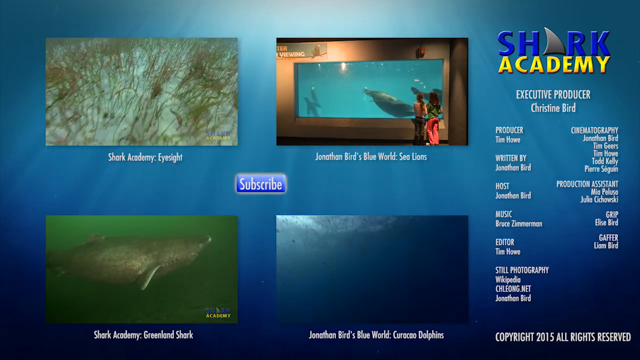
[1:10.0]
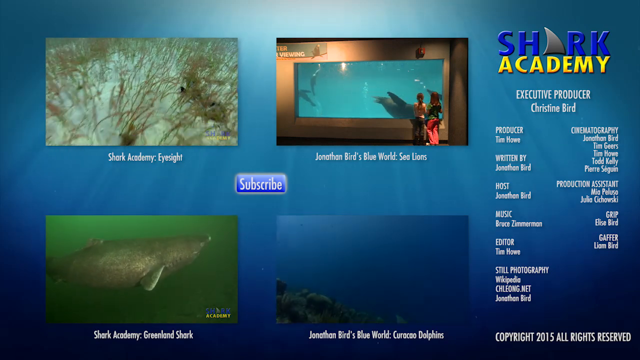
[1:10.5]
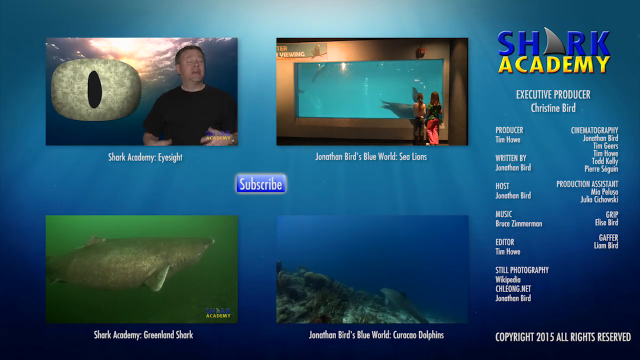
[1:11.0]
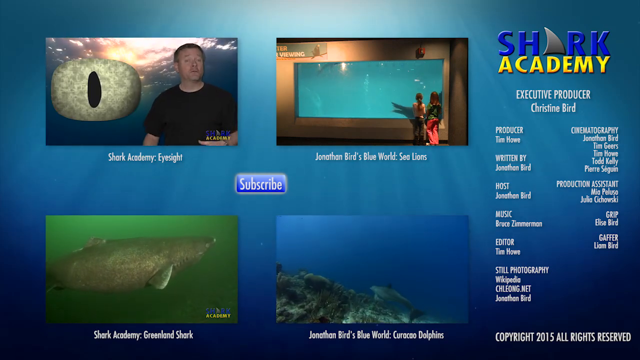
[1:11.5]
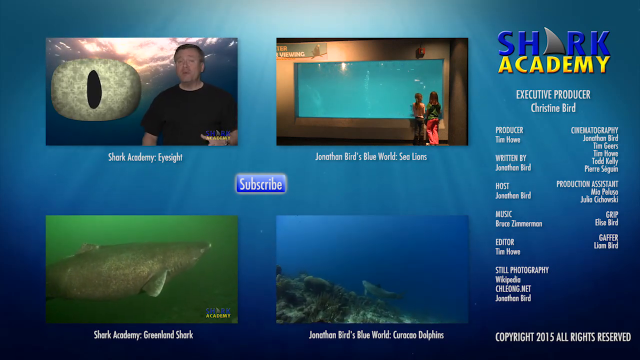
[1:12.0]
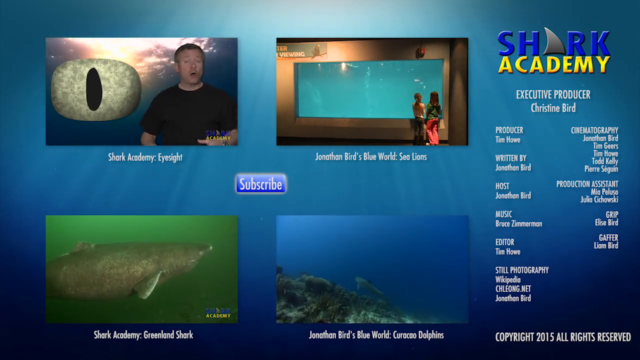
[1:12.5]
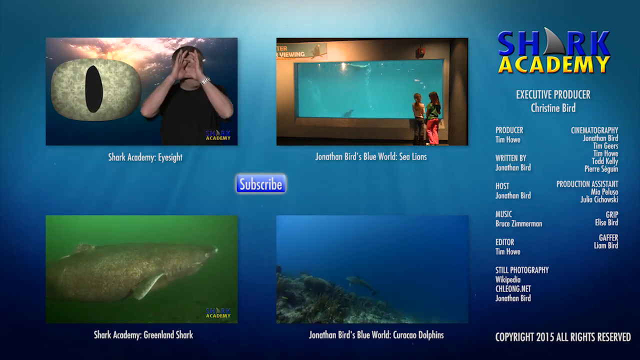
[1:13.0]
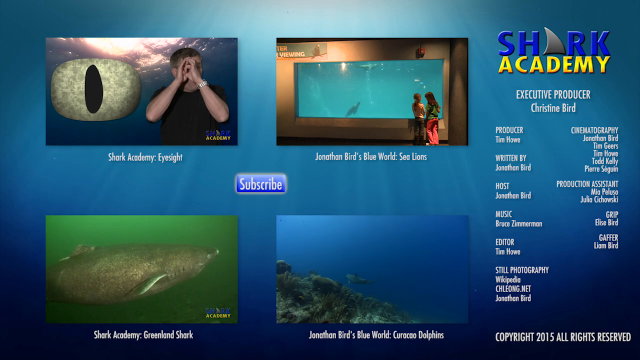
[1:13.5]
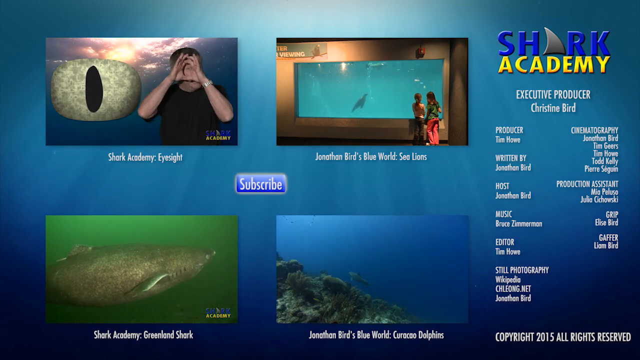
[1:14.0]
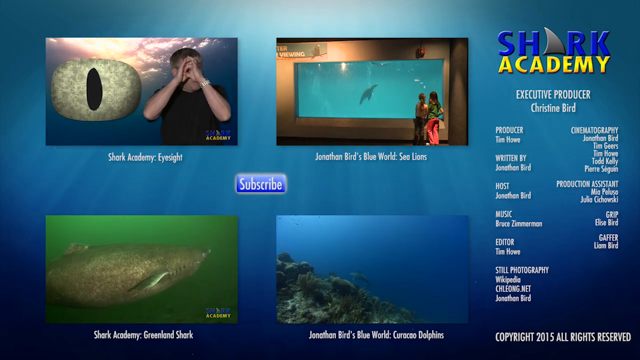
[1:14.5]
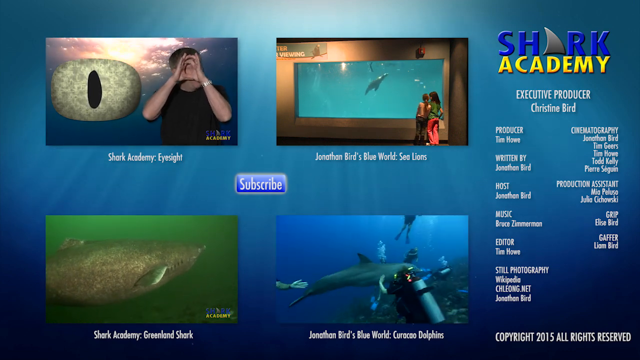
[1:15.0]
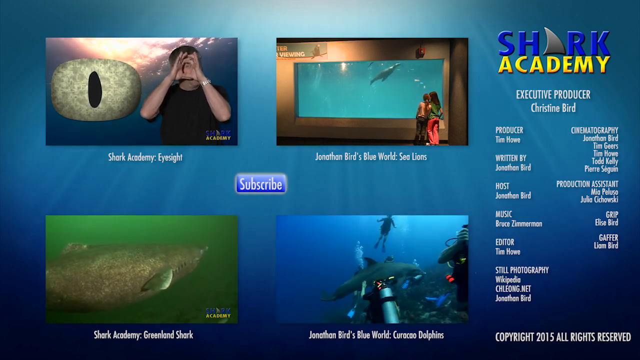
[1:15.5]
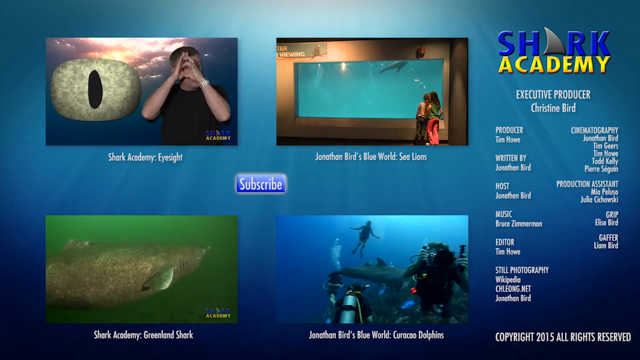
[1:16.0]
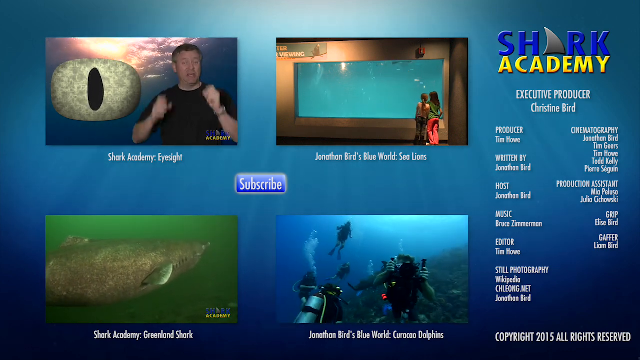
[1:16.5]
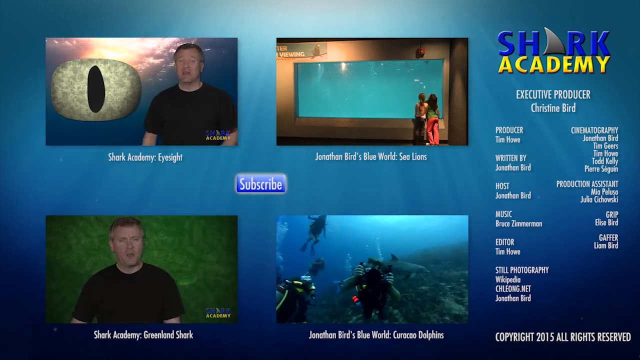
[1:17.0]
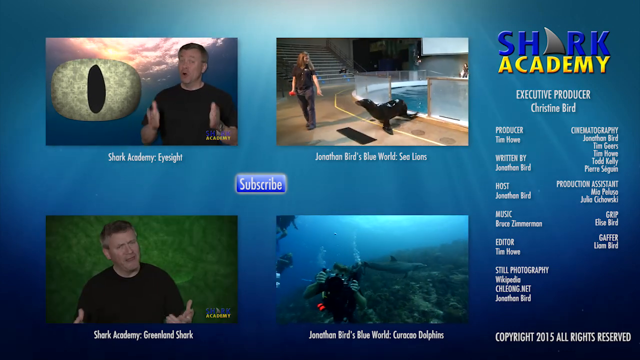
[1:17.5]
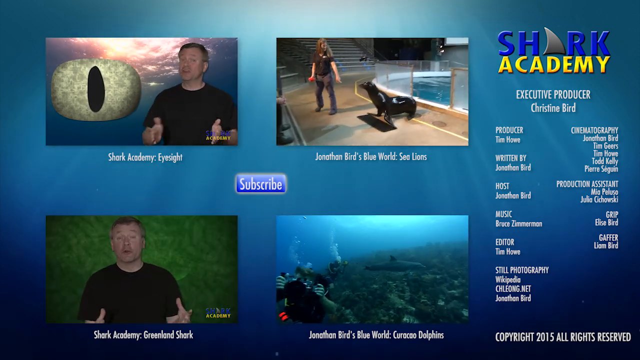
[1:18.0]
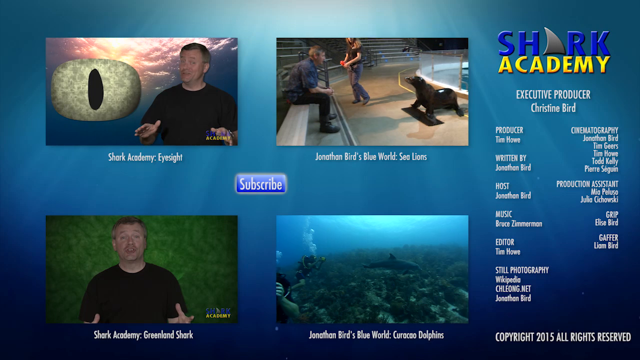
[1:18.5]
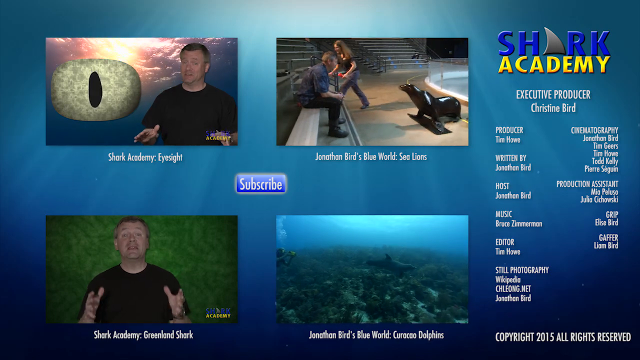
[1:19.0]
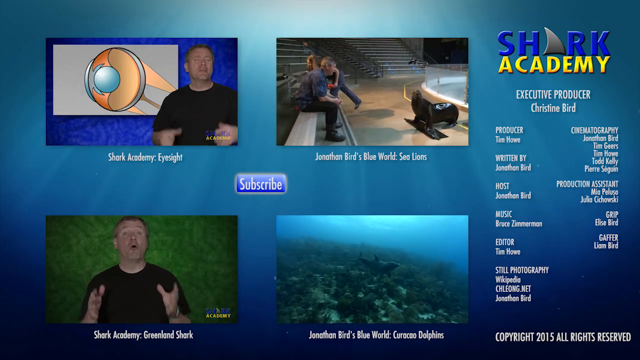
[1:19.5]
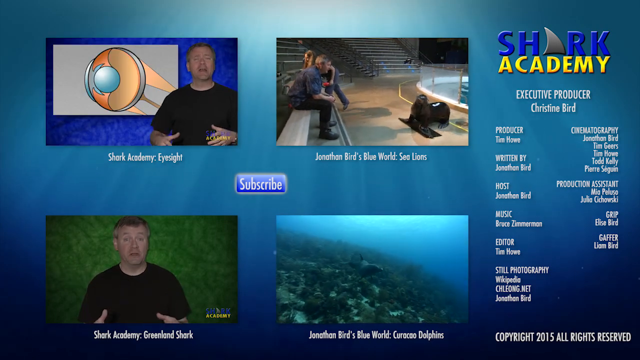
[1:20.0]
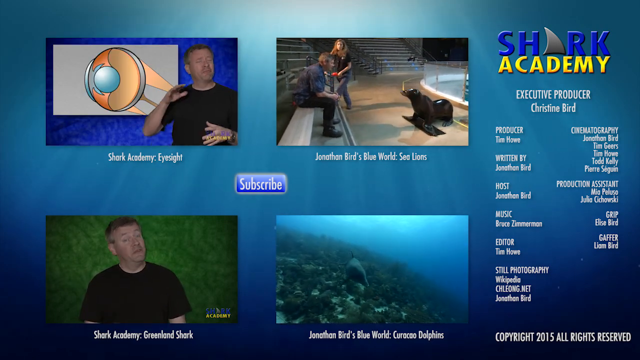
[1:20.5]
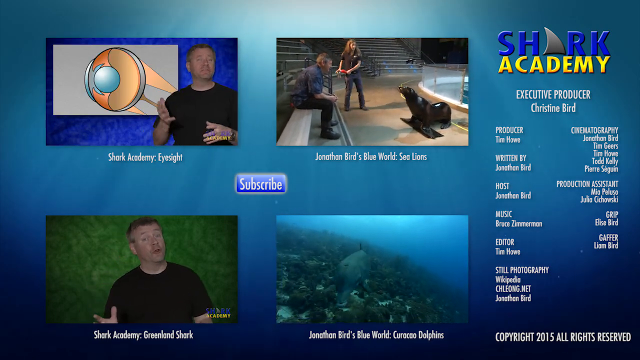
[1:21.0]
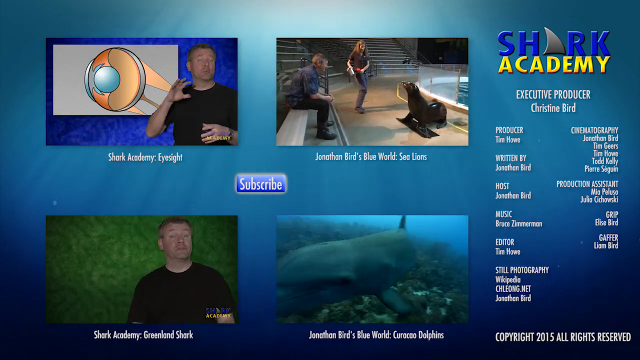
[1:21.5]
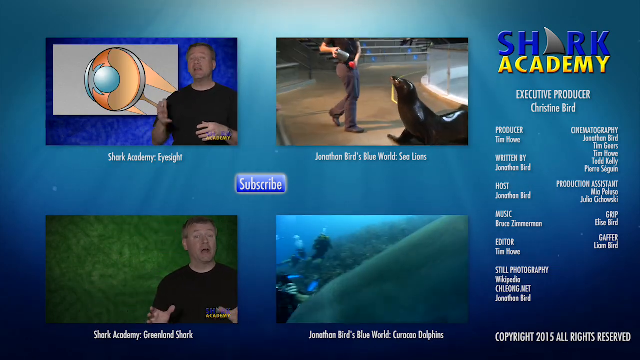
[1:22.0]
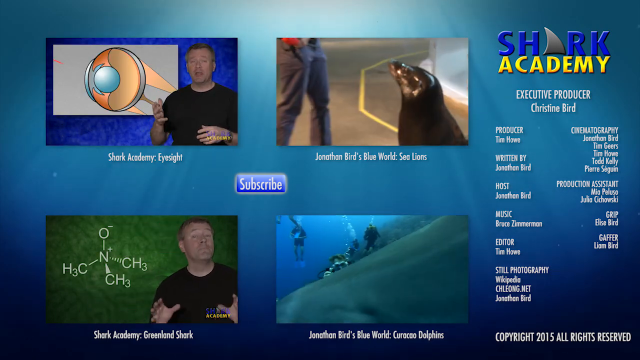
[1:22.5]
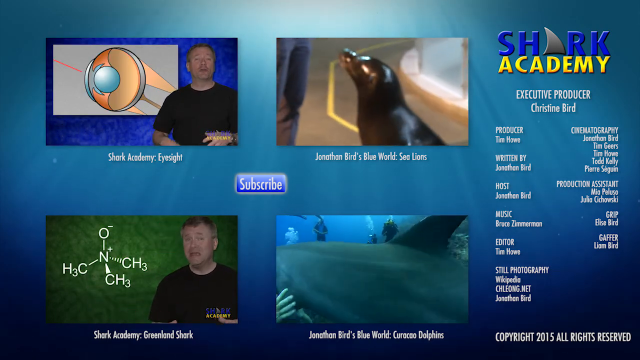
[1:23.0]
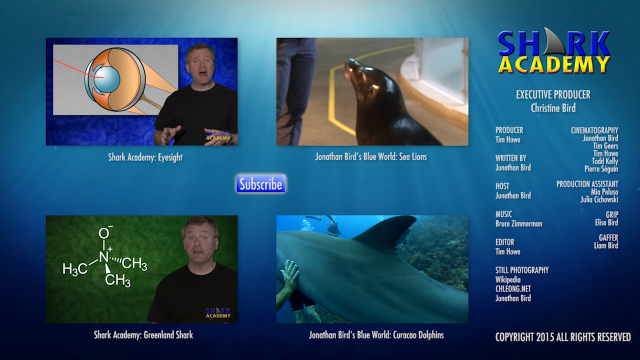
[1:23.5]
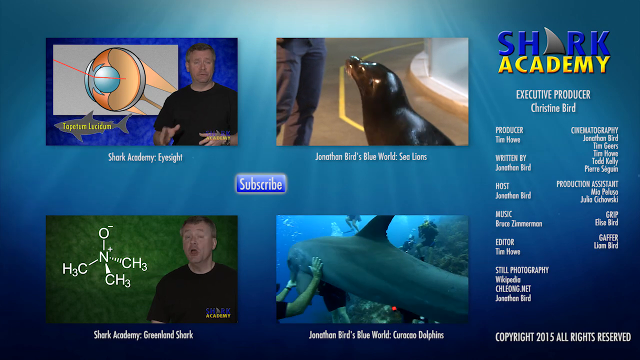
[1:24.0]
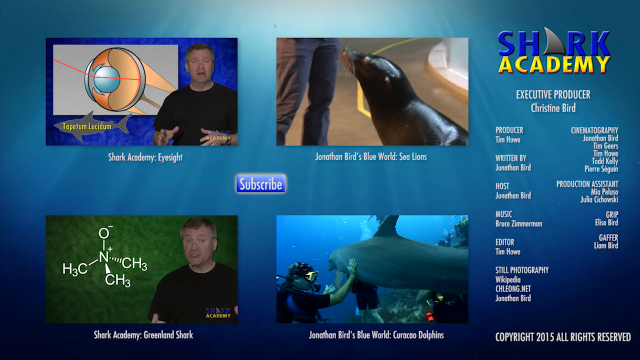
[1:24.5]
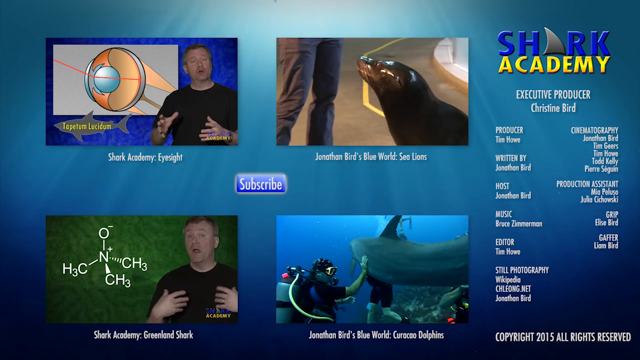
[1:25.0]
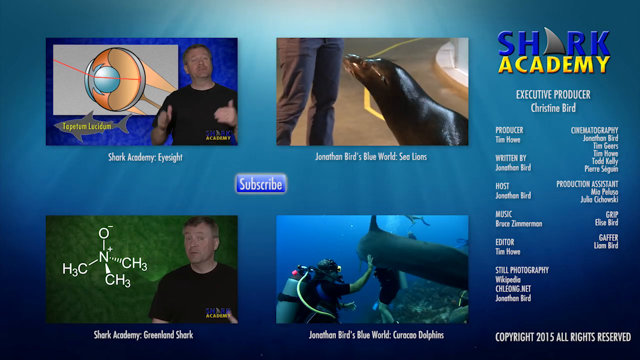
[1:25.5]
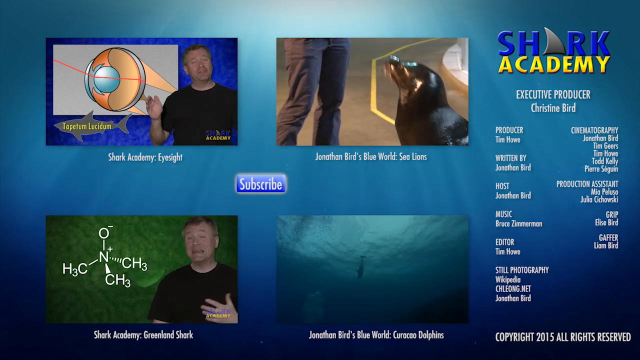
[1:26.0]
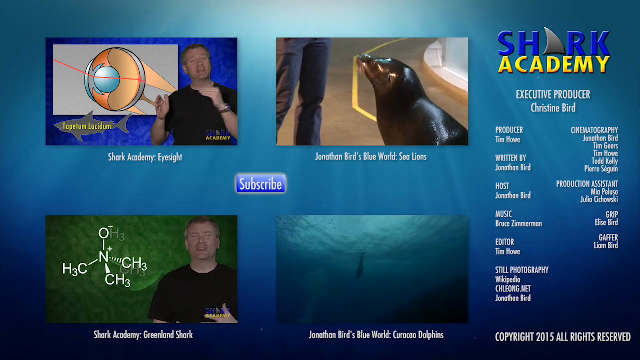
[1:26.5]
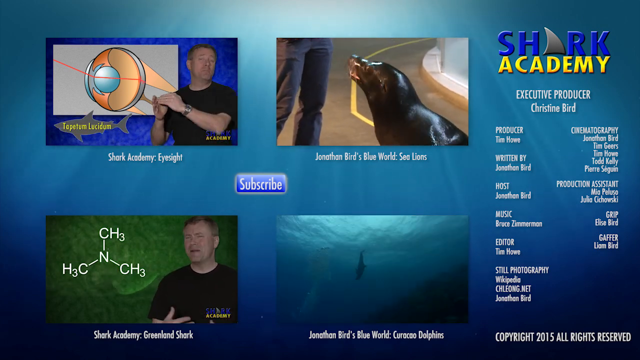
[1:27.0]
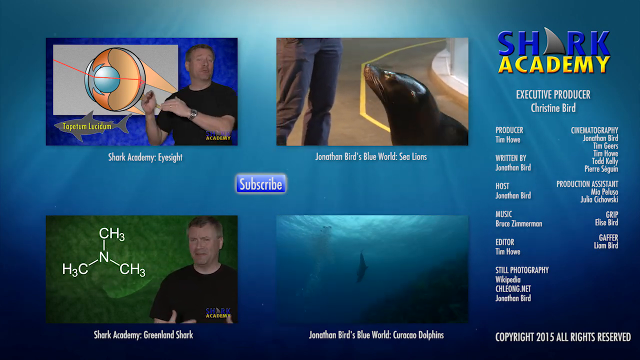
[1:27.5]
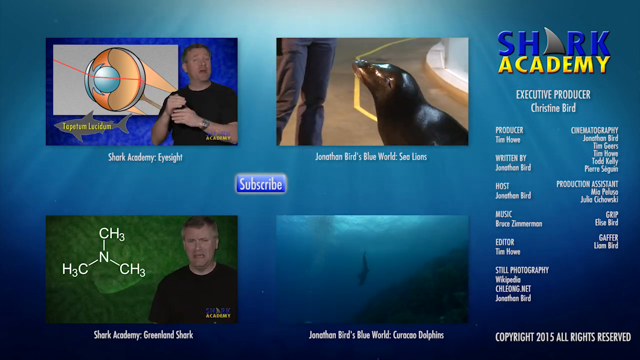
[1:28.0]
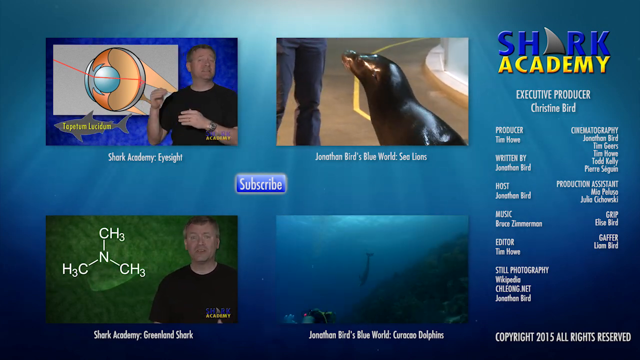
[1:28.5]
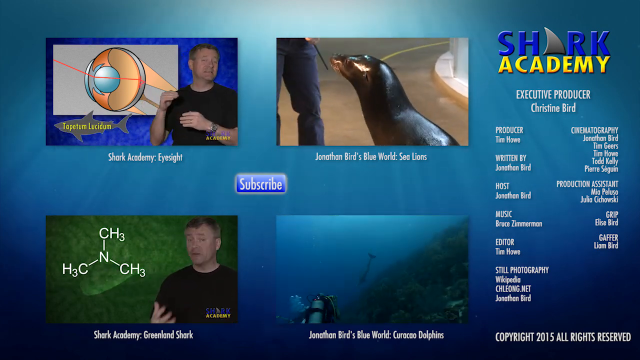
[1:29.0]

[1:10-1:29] The screen still shows four pictures, with a credit on the right to Executive Producer Christine Bird. The top-left picture says "six-gill sharks swim out of the abyss" with "six-gill shark big" under it, runs 13 minutes and 40 seconds, and shows a six-gill shark. The top-right picture reads "diving an abandoned missile silo" and briefly shows the silo, its door a little broken, with a length of 10 minutes and 43 seconds. The bottom-left picture says "Shark Academy Greenland shark" and shows Jonathan Bird in full scuba gear. Behind this picture he is talking, his arms moving, and he shifts a little to the right. The bottom-right picture says "Friendly Bottlenose Dolphin" and "Jonathan Bird's blue world," showing him with a dolphin next to him, along with "Curacao Dolphins."